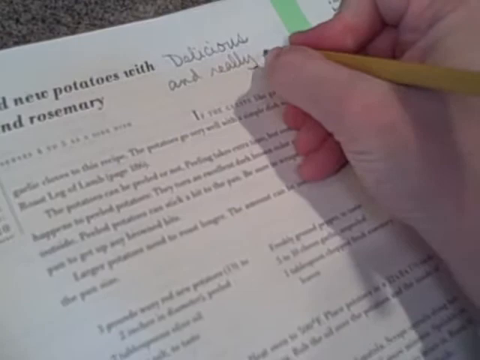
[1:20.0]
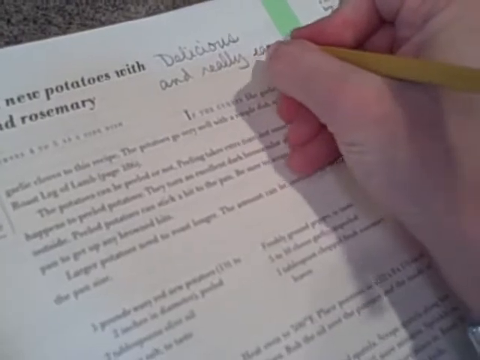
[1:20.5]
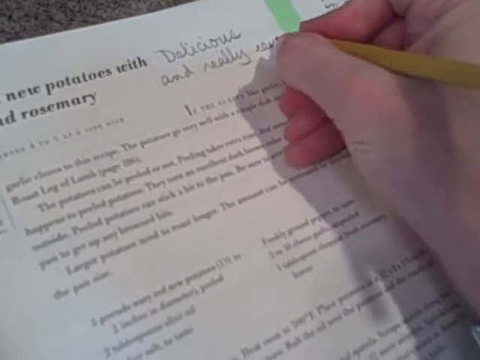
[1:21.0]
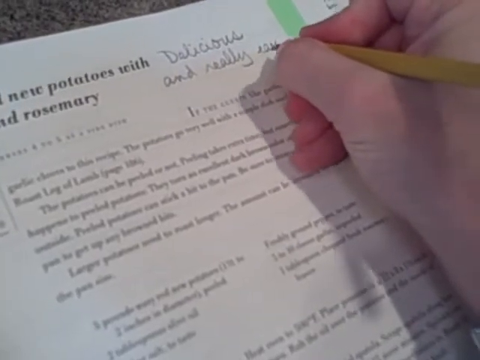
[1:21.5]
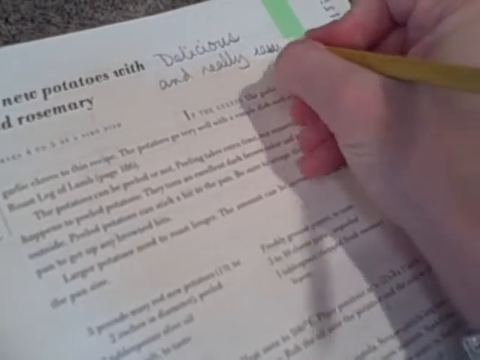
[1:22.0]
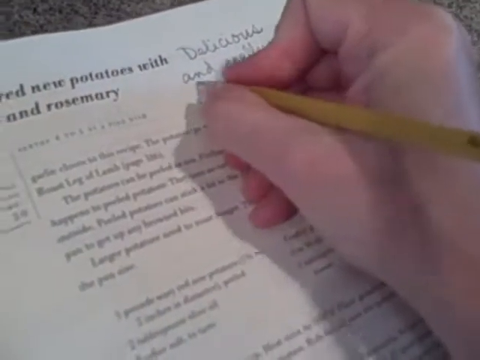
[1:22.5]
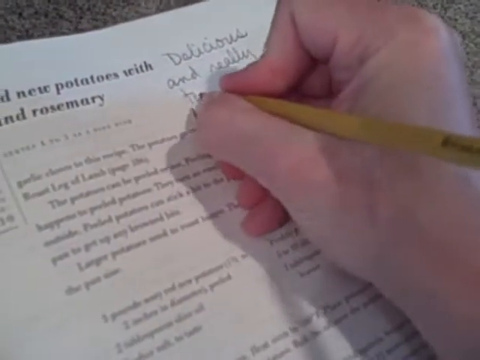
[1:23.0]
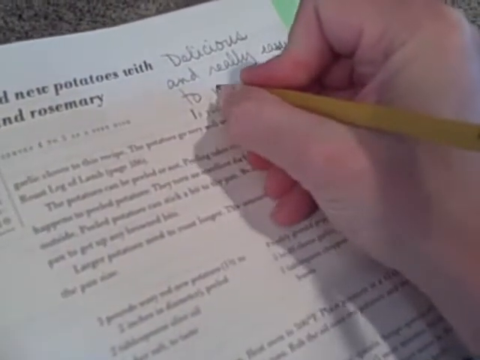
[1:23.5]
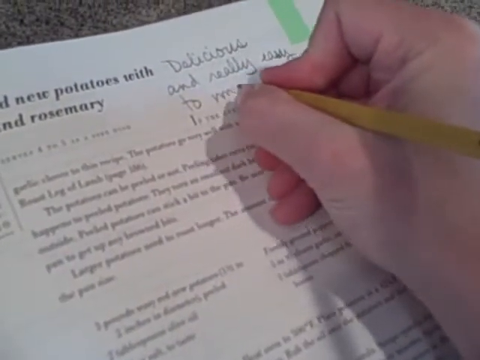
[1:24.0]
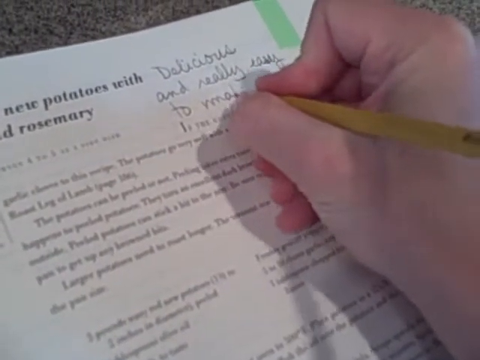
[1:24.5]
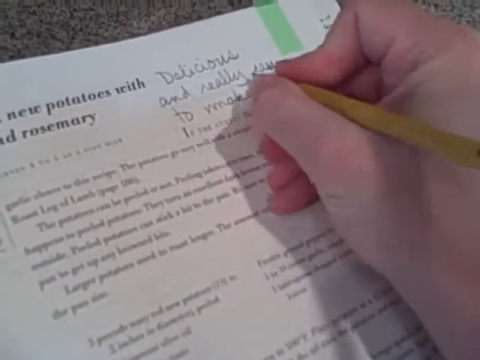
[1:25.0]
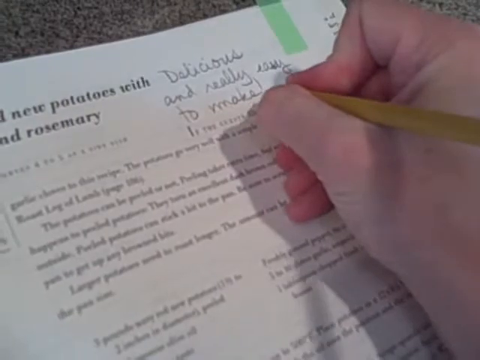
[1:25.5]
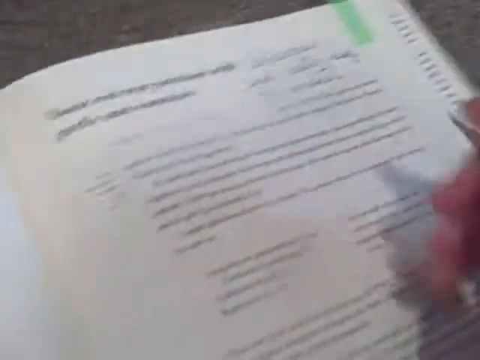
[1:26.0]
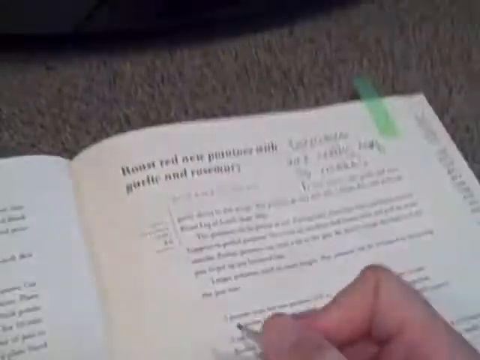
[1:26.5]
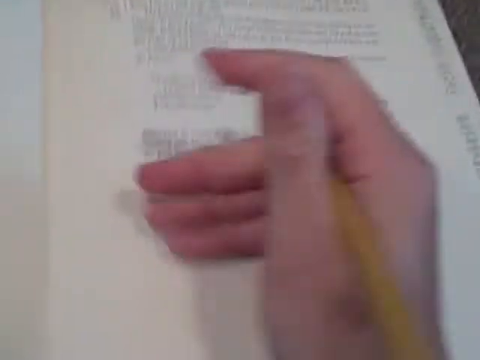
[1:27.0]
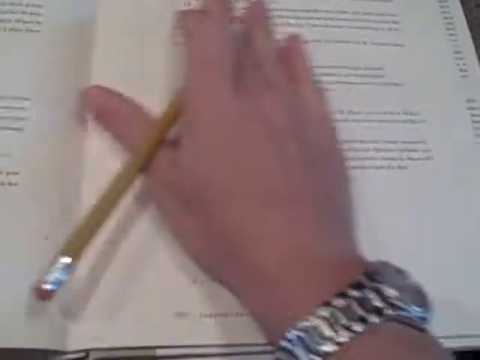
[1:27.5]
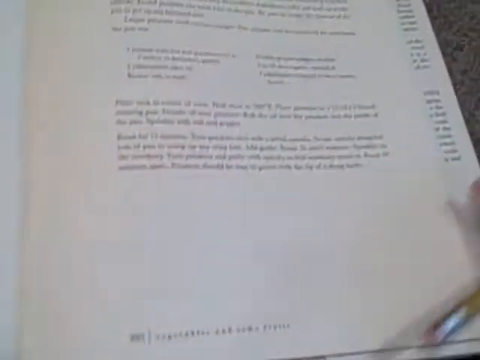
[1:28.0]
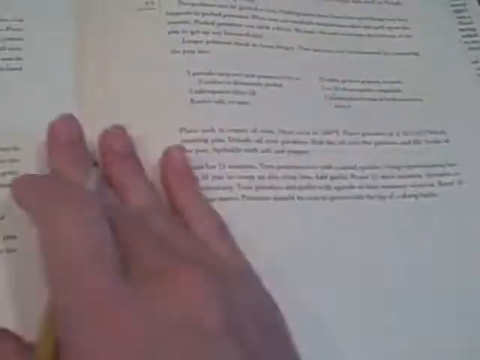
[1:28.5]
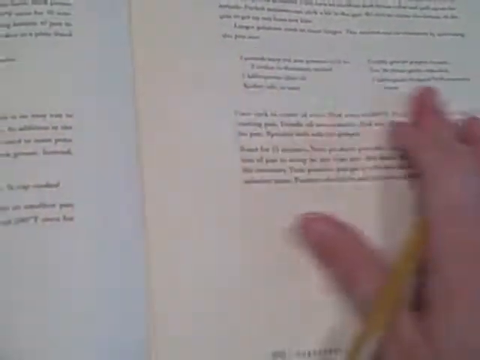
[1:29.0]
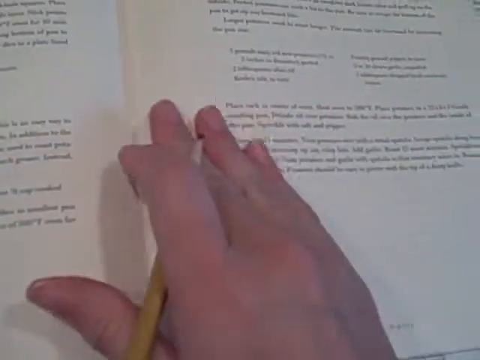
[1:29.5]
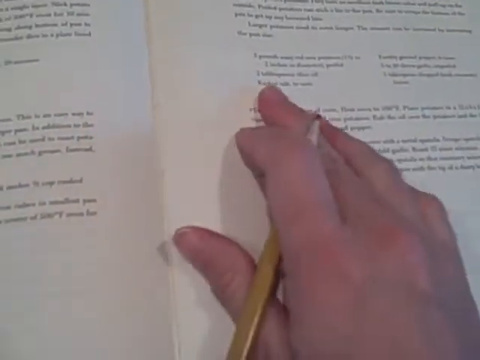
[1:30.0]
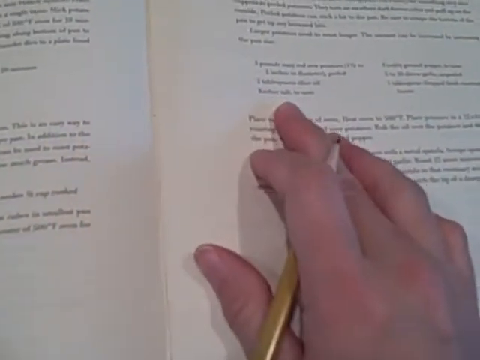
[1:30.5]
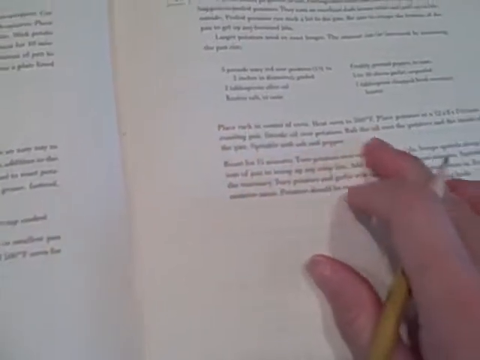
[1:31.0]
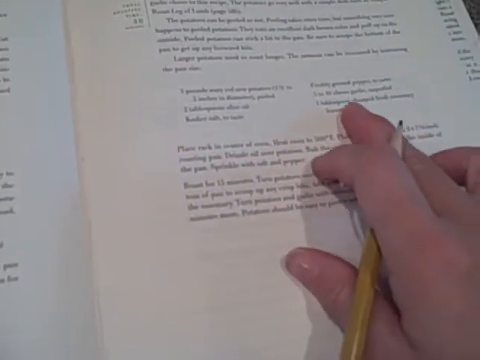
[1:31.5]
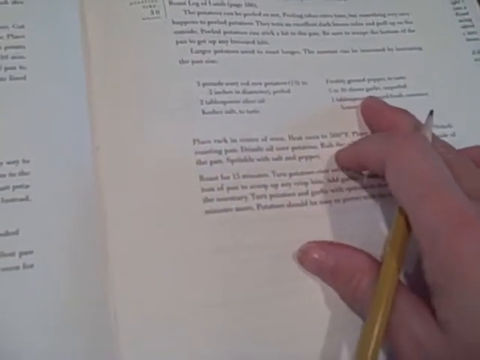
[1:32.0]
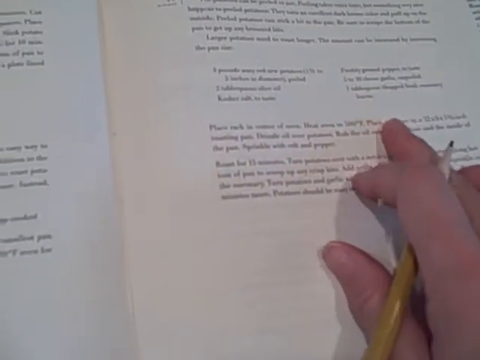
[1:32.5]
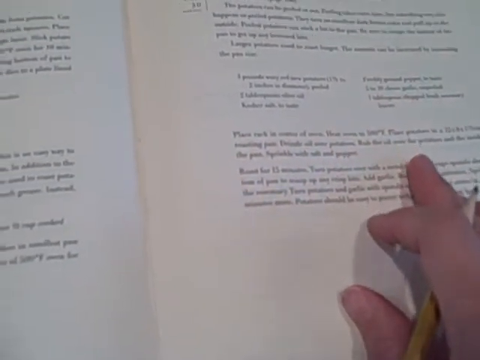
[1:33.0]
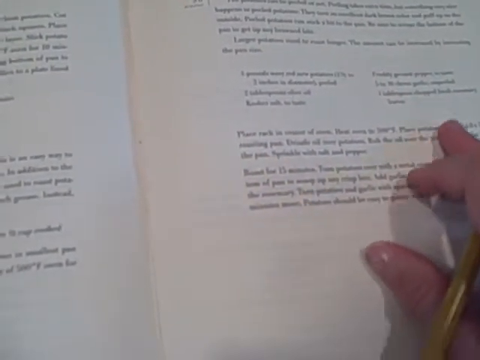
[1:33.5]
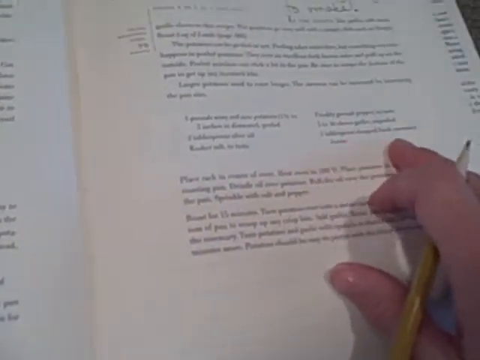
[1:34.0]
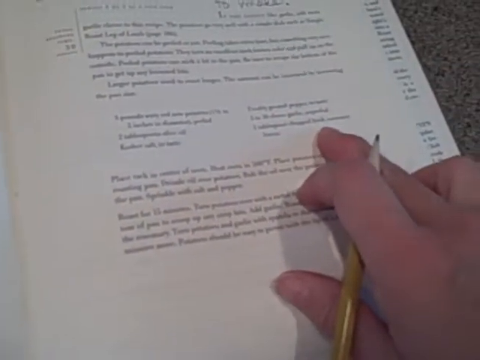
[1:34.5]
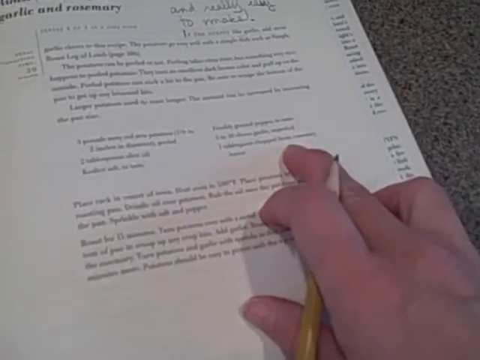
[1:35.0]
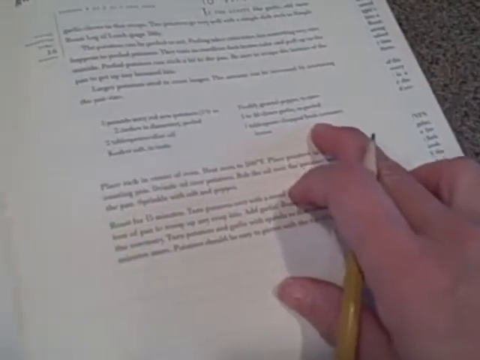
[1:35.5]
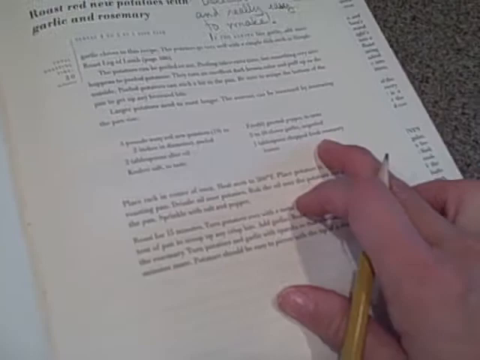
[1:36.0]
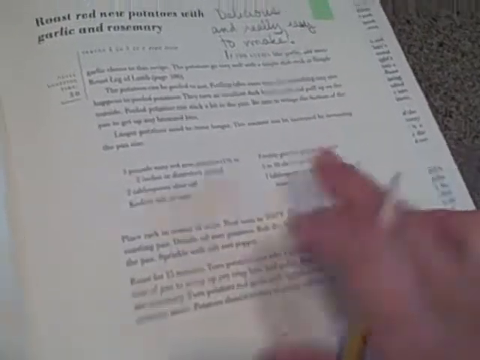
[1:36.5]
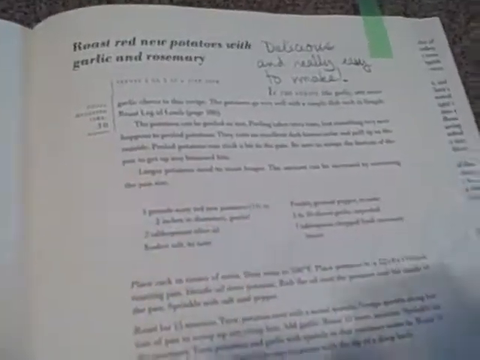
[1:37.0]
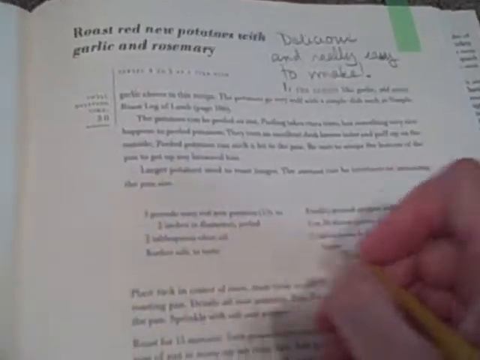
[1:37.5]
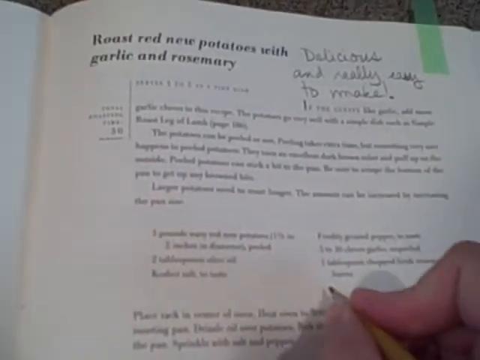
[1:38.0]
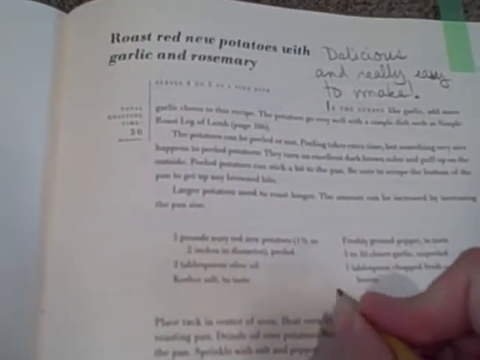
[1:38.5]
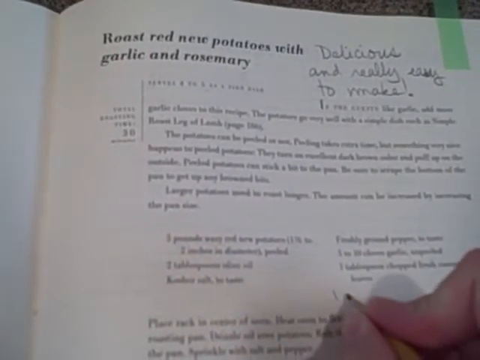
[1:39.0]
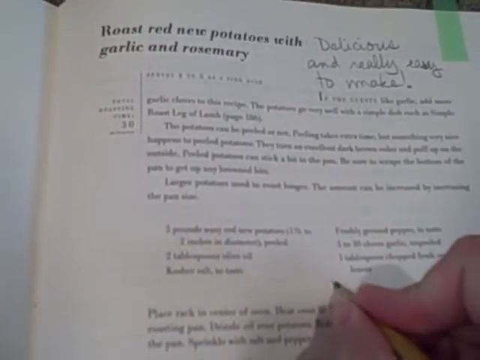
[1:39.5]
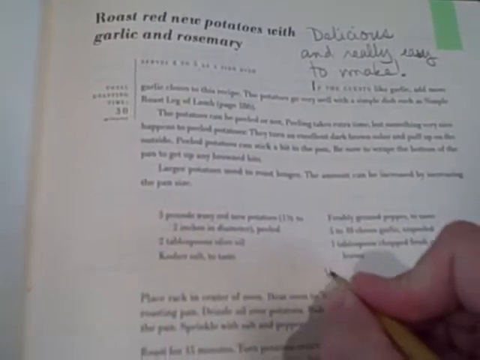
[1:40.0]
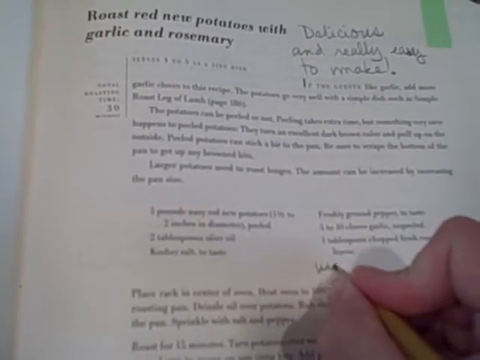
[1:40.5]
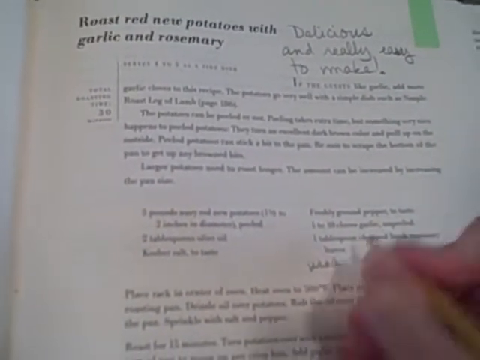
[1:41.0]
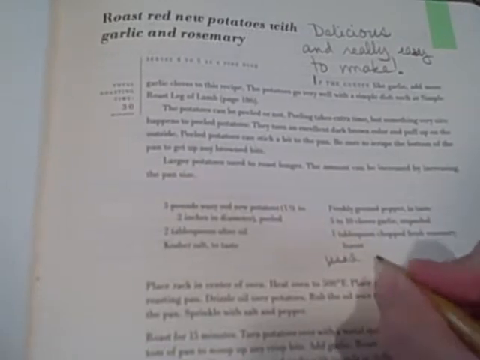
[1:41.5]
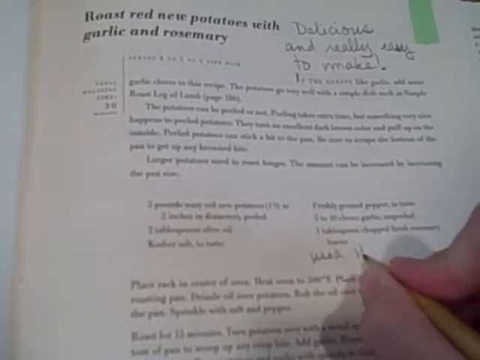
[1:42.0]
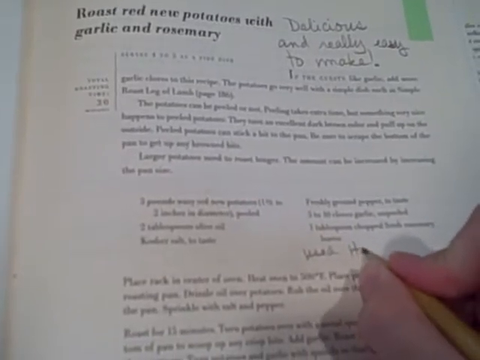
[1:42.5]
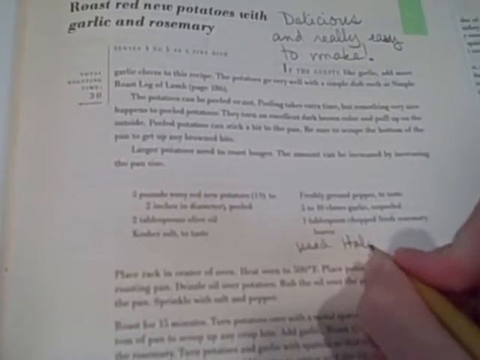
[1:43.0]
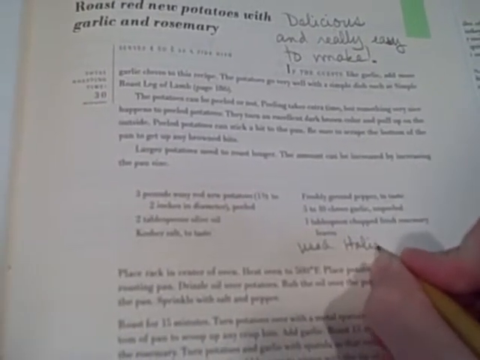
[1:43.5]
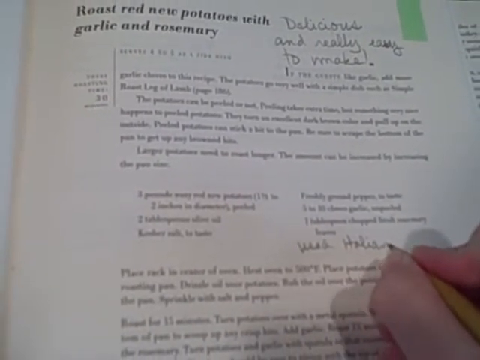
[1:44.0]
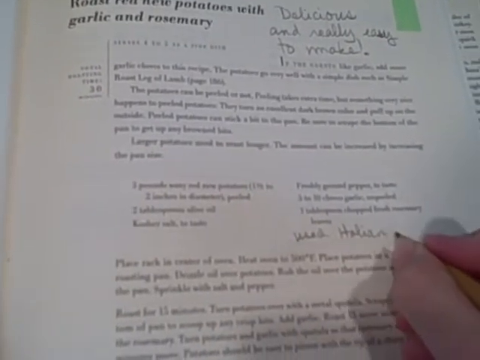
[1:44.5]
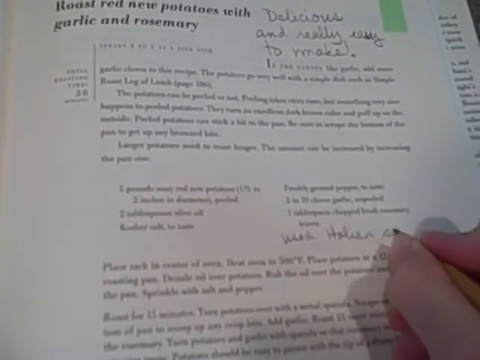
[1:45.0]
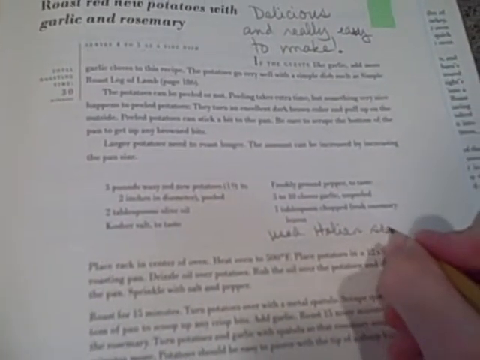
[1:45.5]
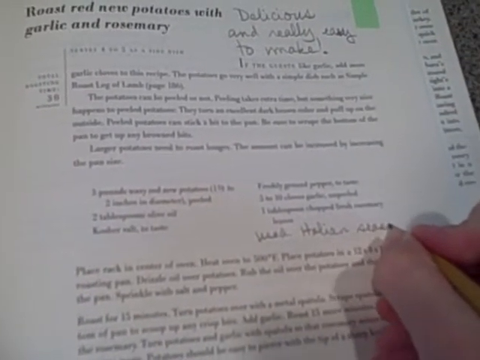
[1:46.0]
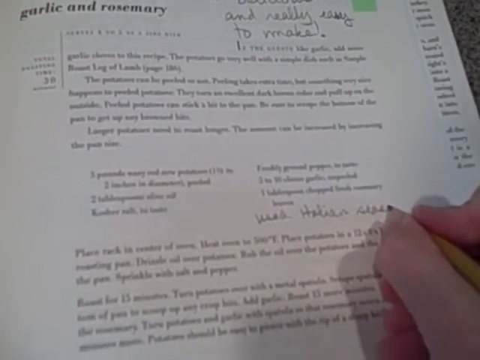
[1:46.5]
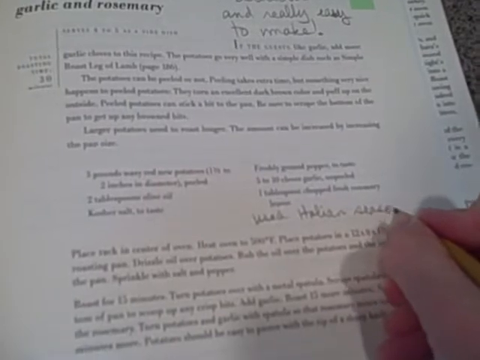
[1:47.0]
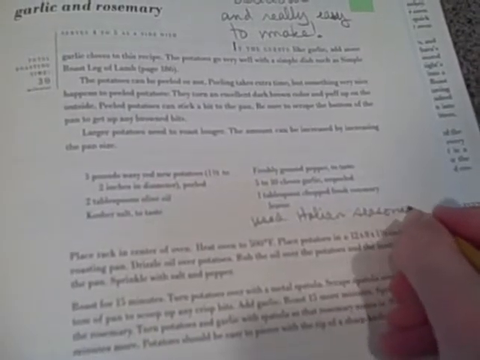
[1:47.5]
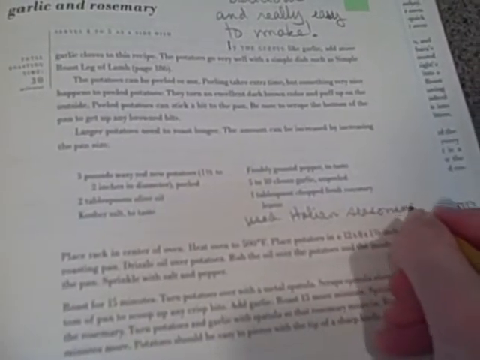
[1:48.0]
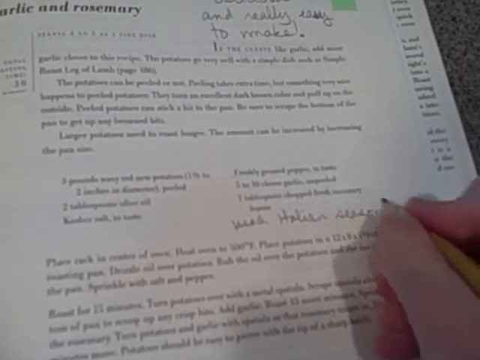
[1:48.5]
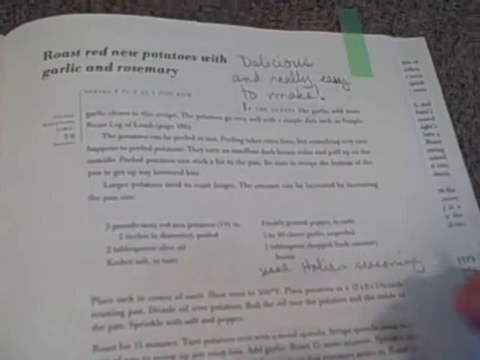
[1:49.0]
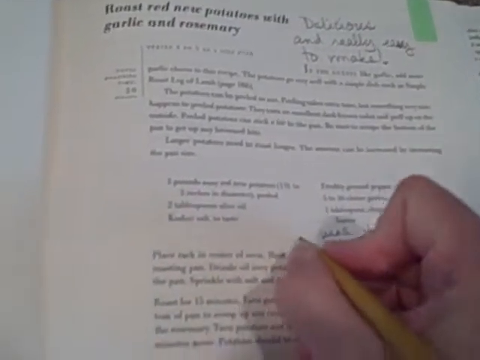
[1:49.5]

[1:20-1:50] The written words read "delicious and really easy to make", with an exclamation mark and a large dot. She moves away from that part of the page and flattens it with her right hand, running her fingers over it three times. She points to passages of text in the middle of the page that look like the ingredients, then writes below them "need Italian seasoning" and appears to draw a circle just before that, seemingly adding one of her own ingredients to the recipe. Her hand moves with the silver watch on, and she holds the pencil between her middle and index fingers while stroking the page flat and writing again in joined-up writing. The left-hand side of the page is visible, and on the right-hand side is more of the grey granite worktop with black specks.